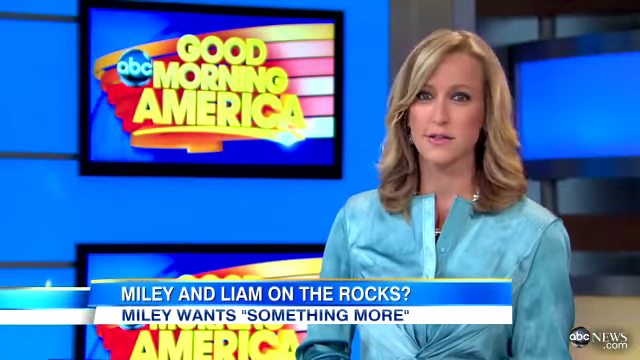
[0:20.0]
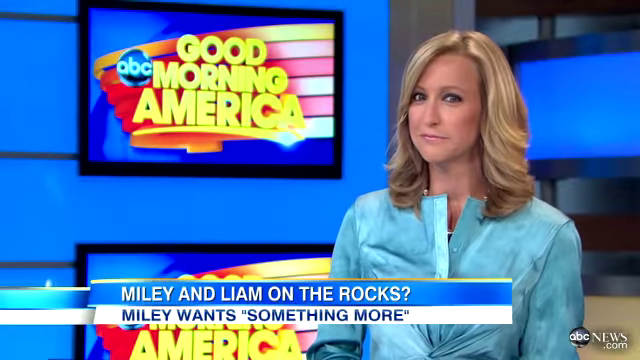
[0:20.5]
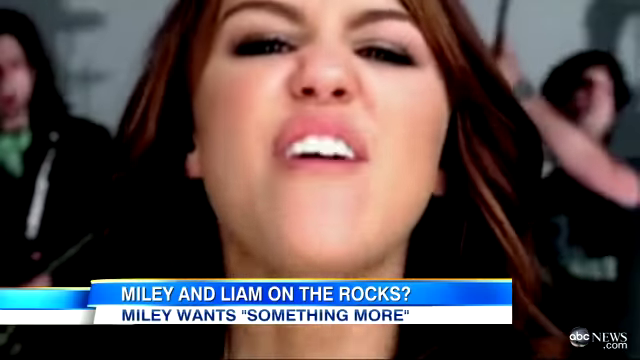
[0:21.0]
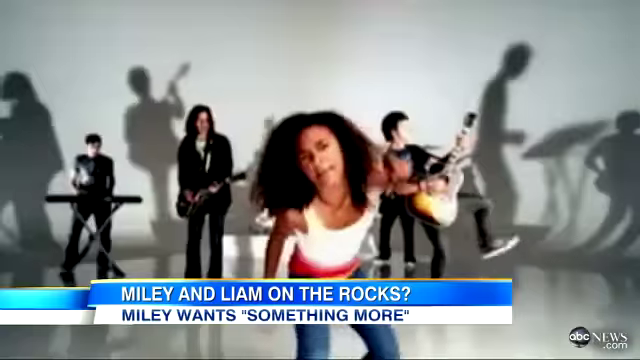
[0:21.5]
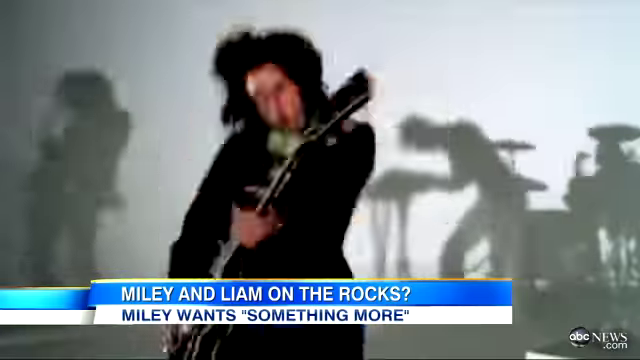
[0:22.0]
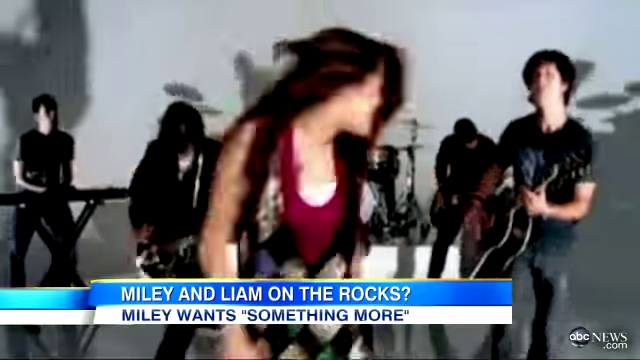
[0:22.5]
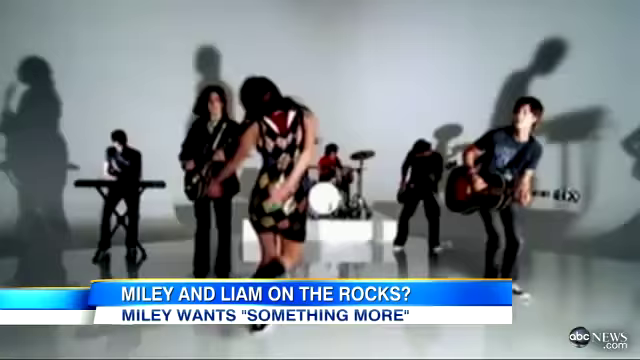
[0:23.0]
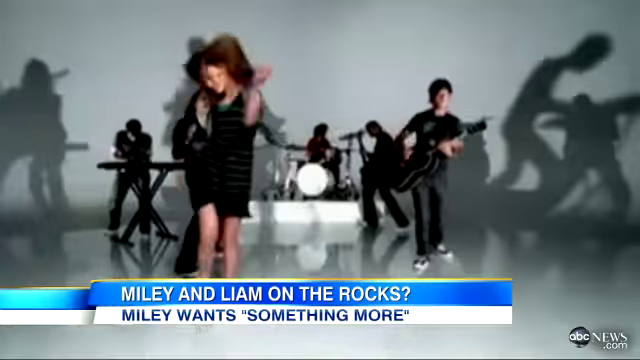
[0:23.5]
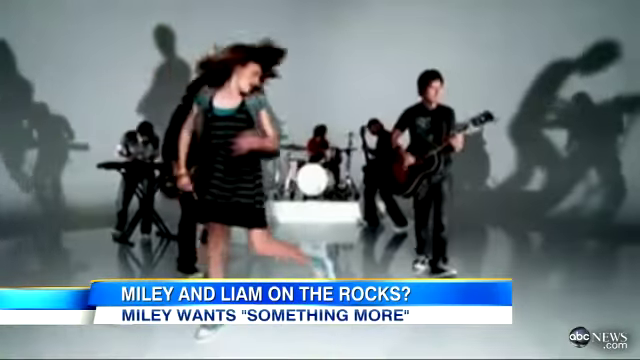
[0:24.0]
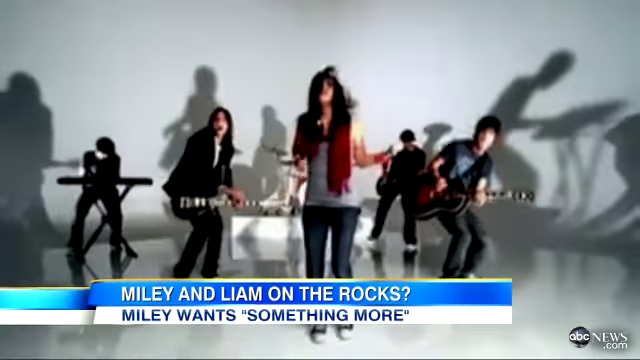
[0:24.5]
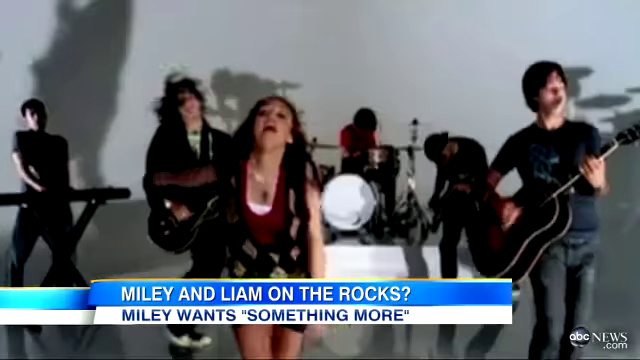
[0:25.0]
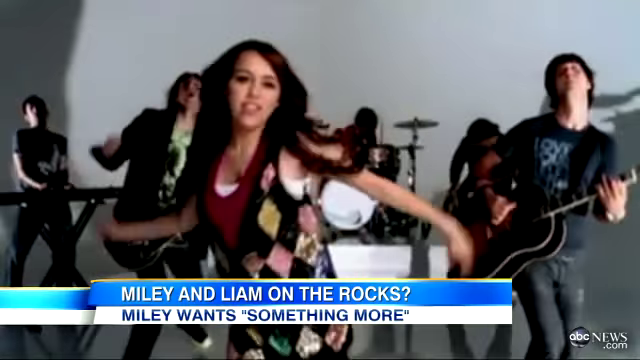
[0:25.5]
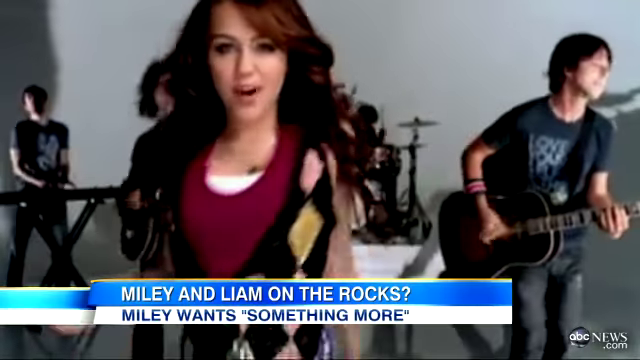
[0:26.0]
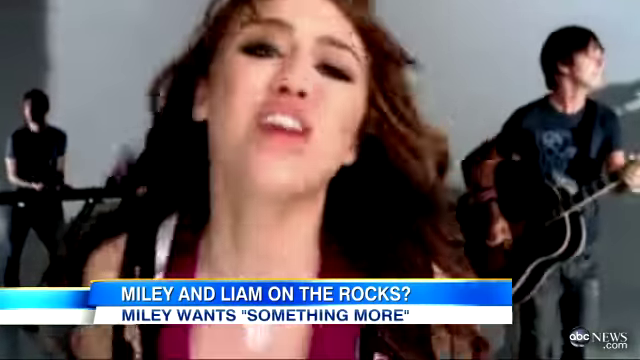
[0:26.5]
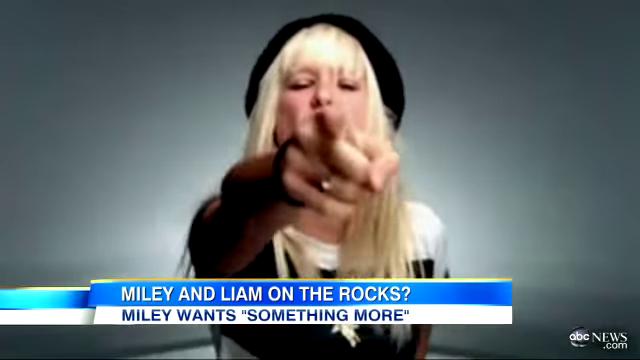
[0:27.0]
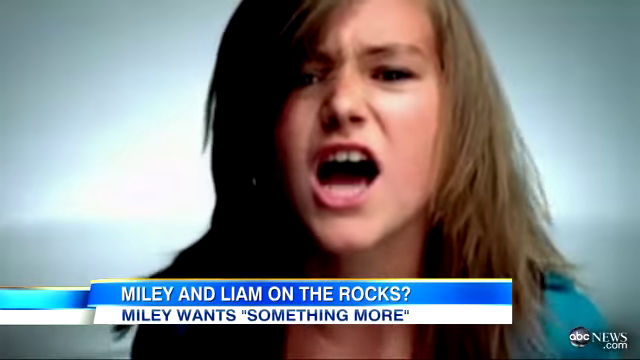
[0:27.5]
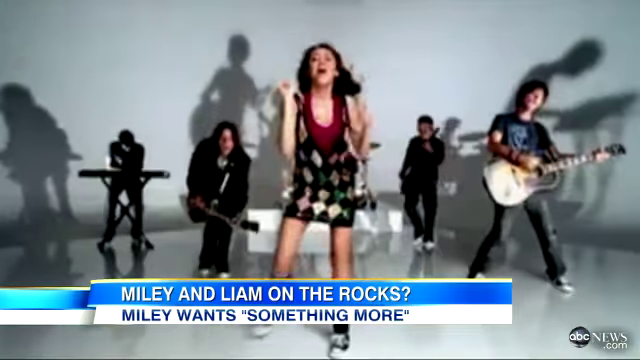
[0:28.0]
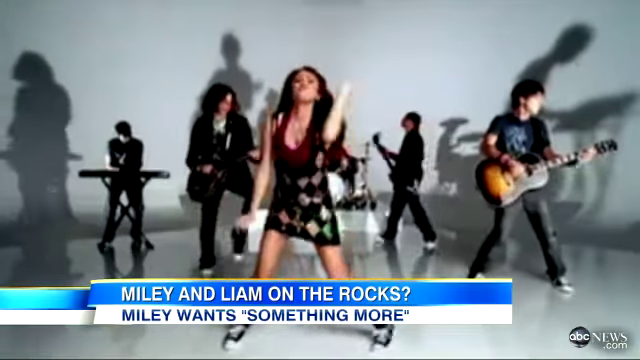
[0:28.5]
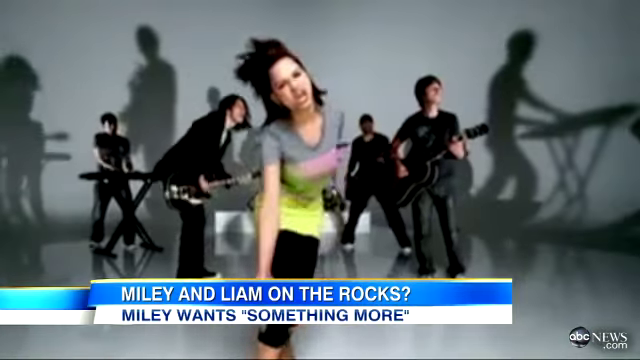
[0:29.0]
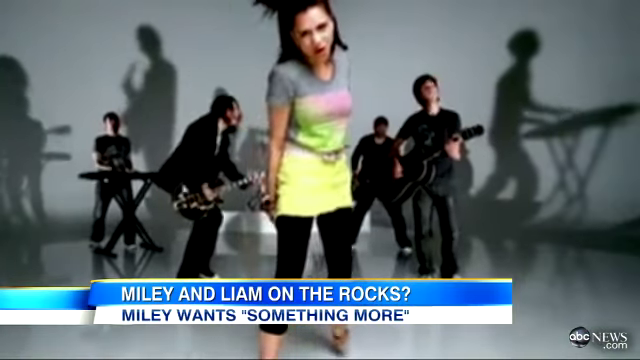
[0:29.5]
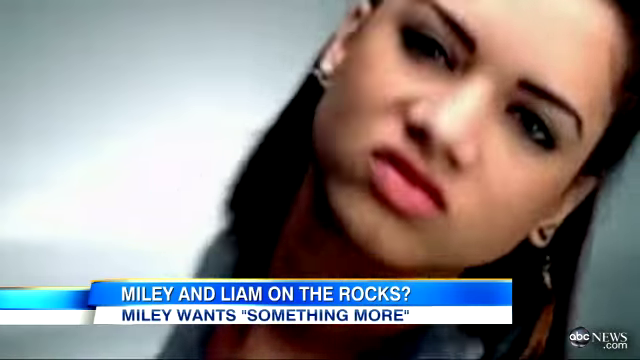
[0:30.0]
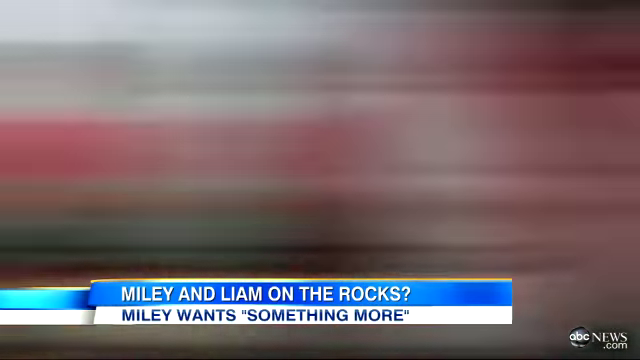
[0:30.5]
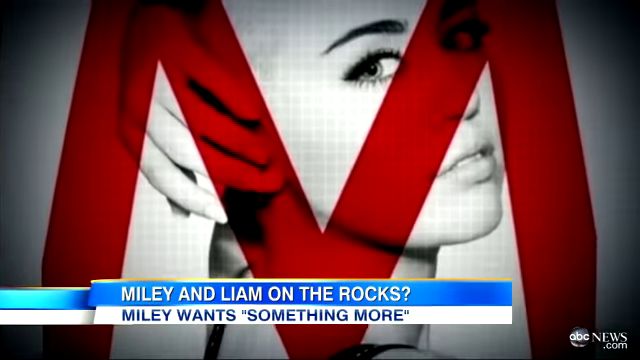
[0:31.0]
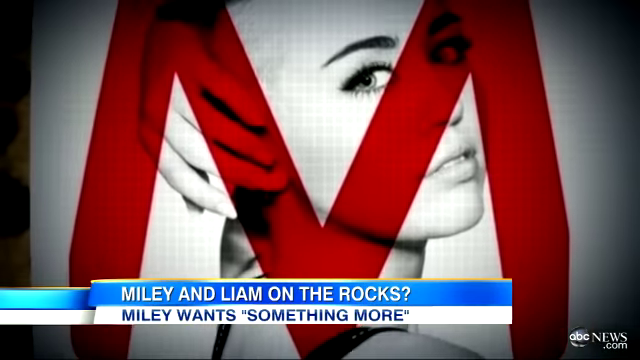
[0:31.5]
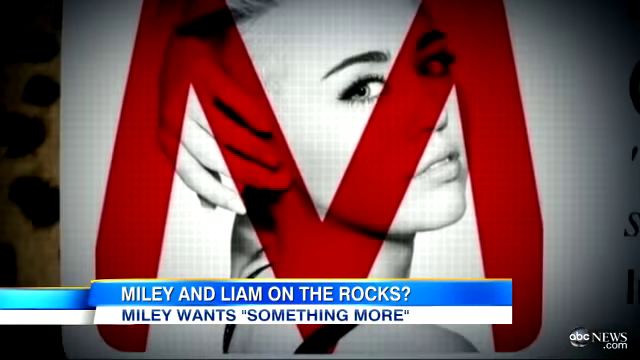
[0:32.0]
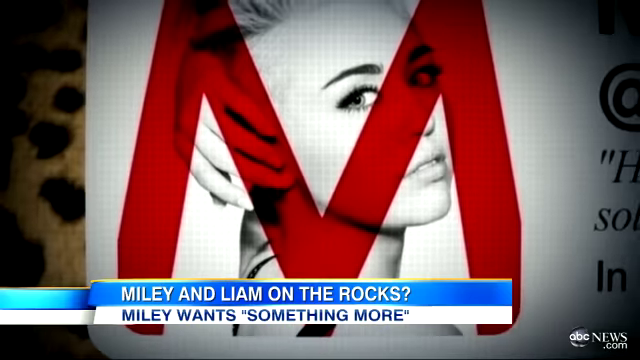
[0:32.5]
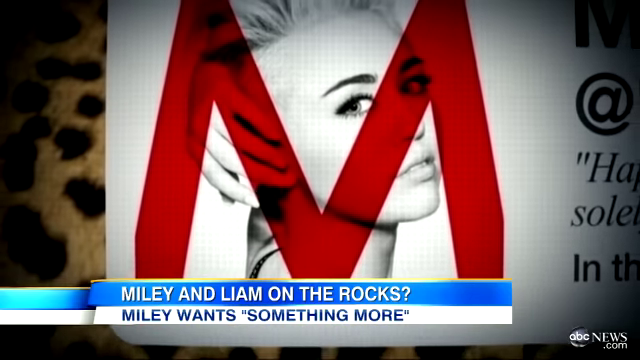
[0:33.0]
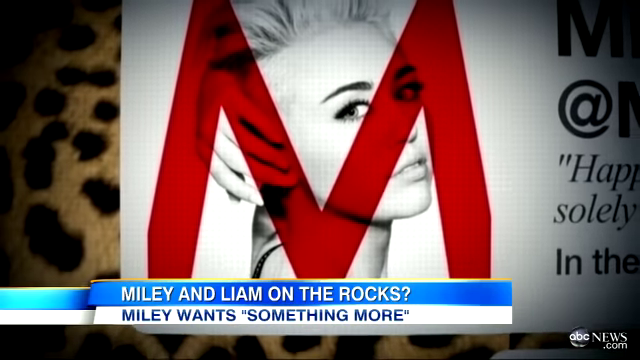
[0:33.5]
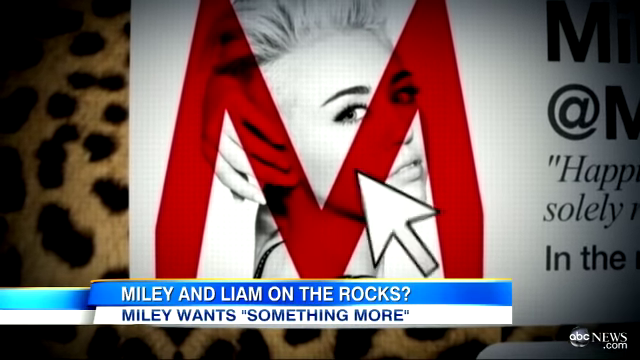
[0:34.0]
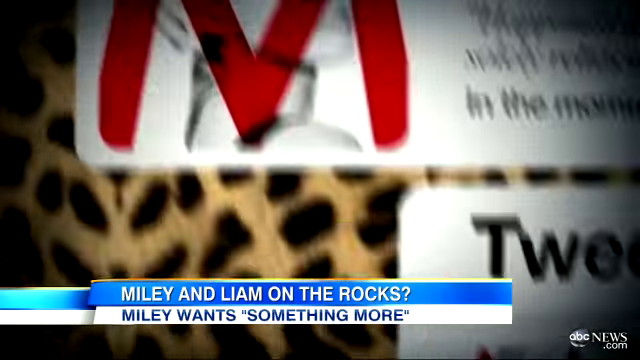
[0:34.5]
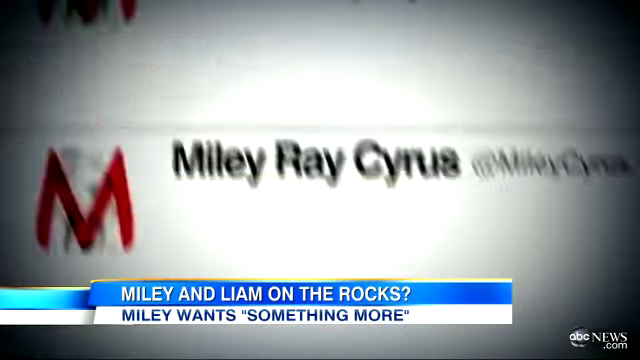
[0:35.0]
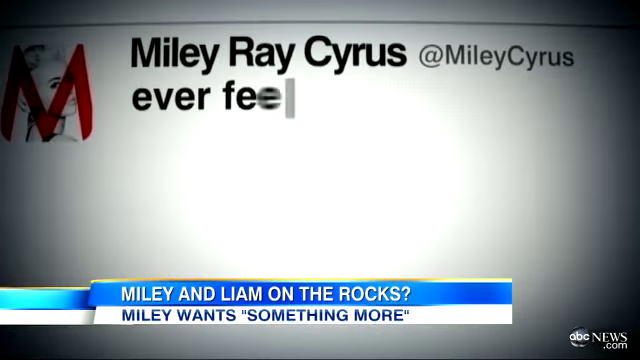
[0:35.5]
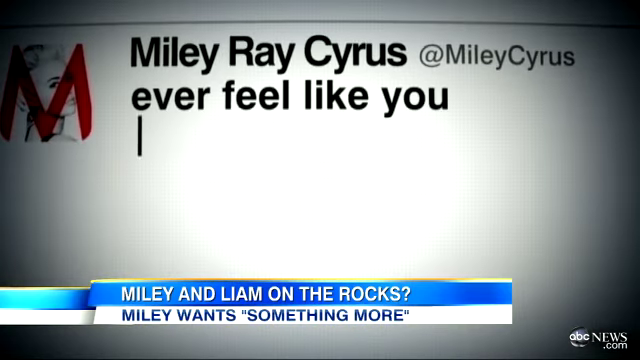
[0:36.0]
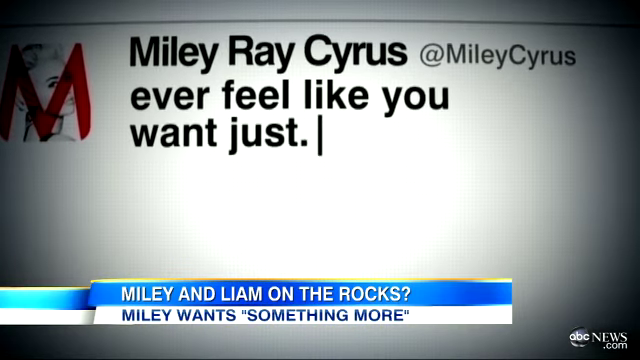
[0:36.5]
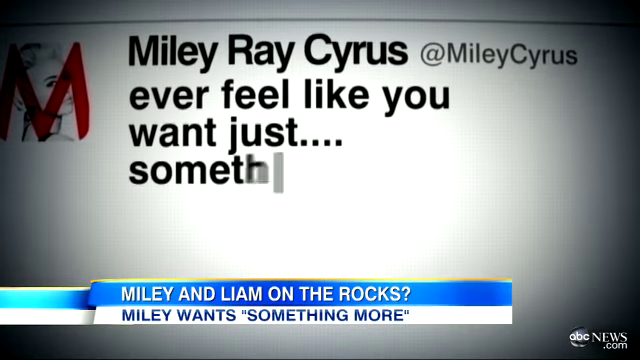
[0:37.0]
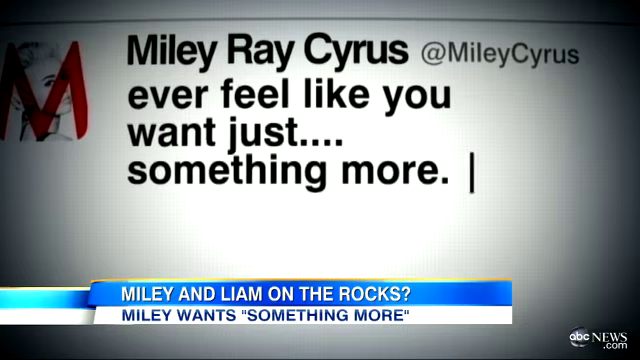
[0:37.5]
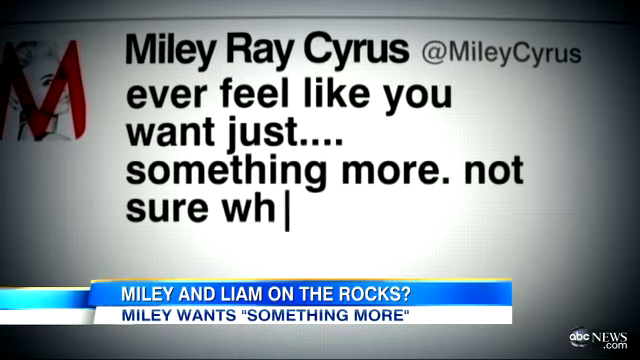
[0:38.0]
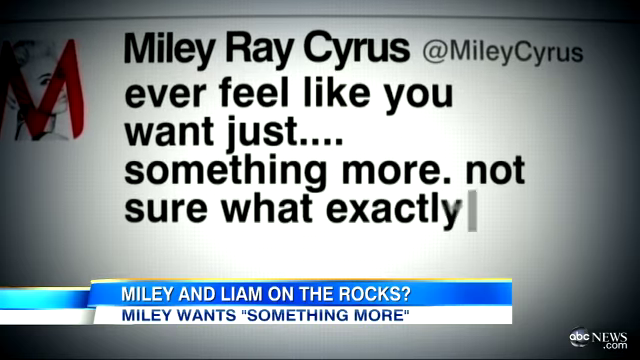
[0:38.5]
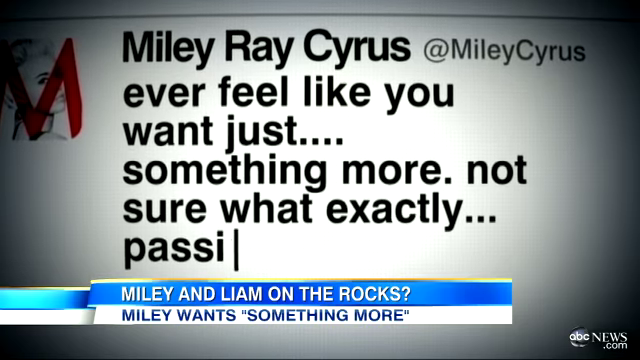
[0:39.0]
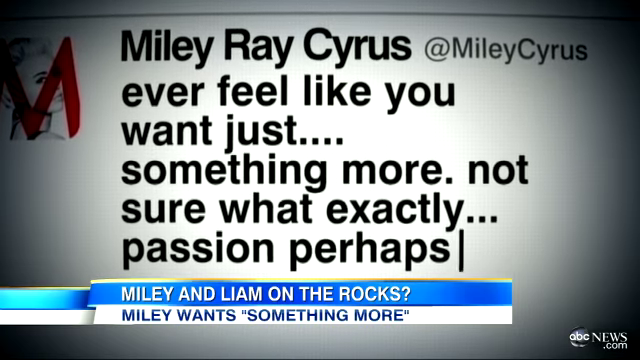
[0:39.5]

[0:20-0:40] The blonde woman anchor presents a video of Miley Cyrus that looks like a rock star video, with a big band behind her: a guitar player, a keyboard player and a drummer. Next comes something almost like an album cover of Miley with a big M over it, and then a tweet from Miley Ray Cyrus: "ever feel like you want just something more just not exactly sure what it is", followed by "passion, perhaps". Another video takes place in kind of a plain room with just a plain wall behind; a couple of people are singing, not just Miley Cyrus.